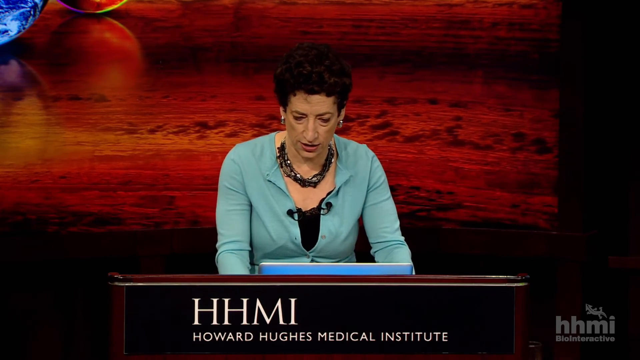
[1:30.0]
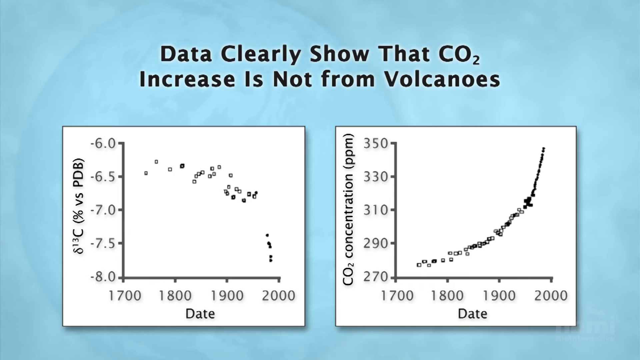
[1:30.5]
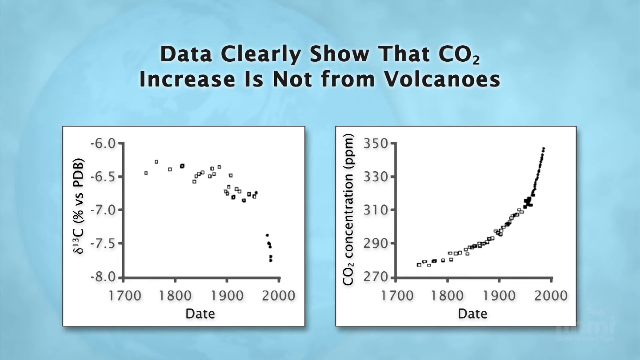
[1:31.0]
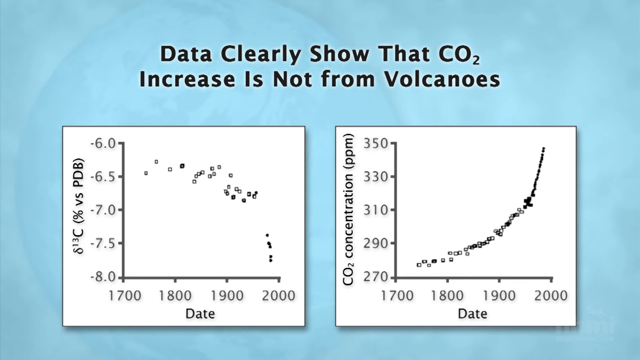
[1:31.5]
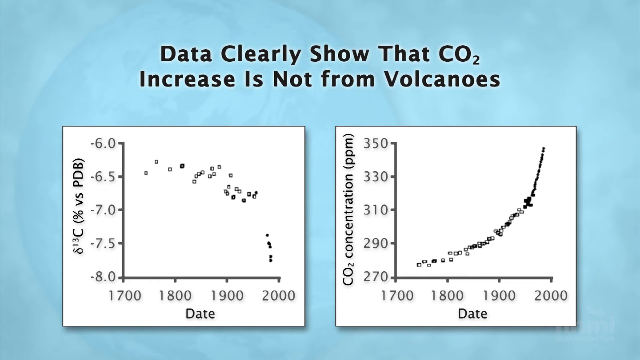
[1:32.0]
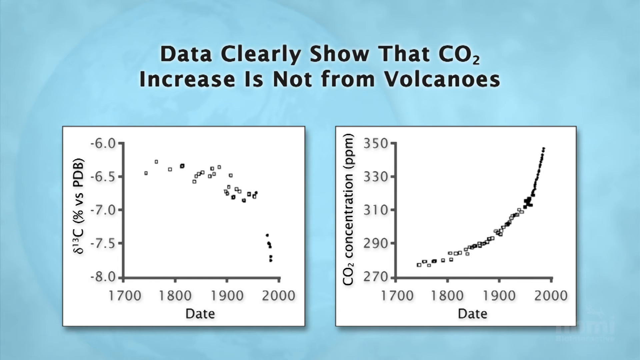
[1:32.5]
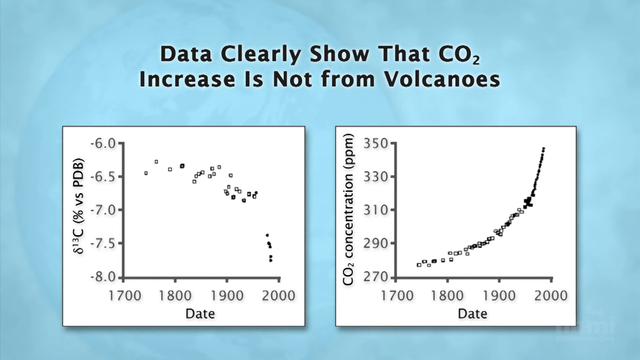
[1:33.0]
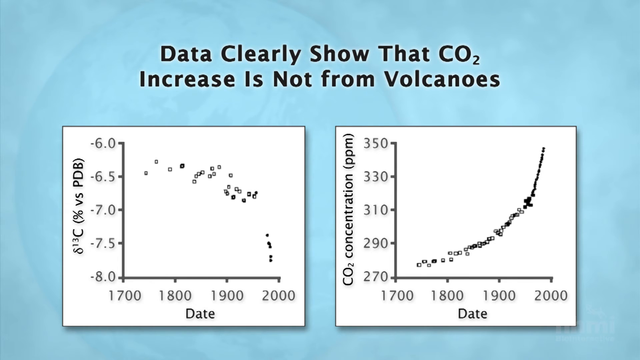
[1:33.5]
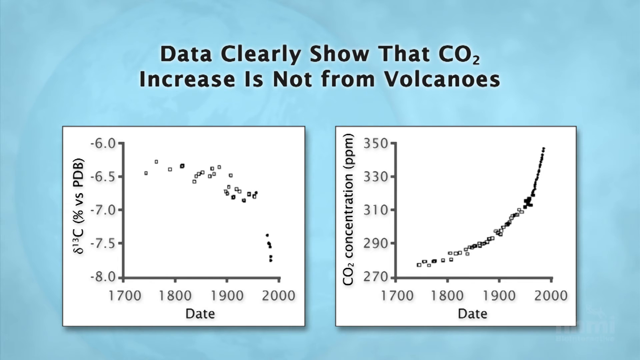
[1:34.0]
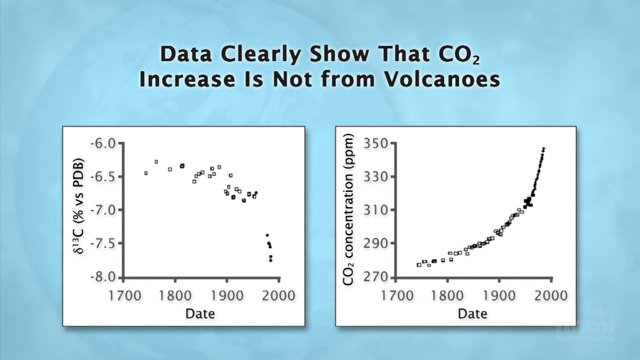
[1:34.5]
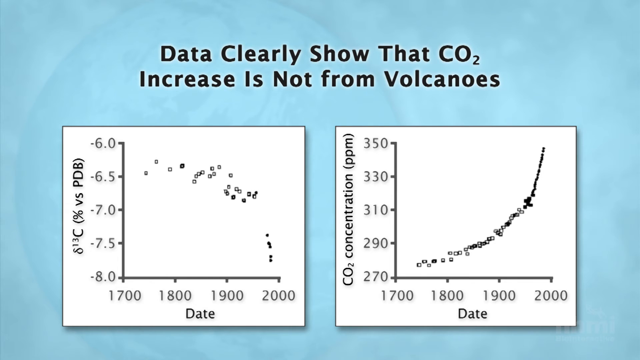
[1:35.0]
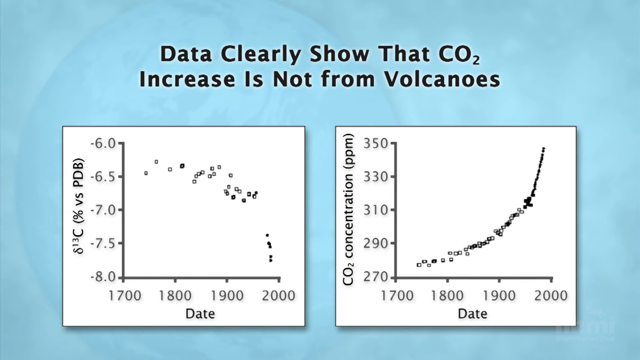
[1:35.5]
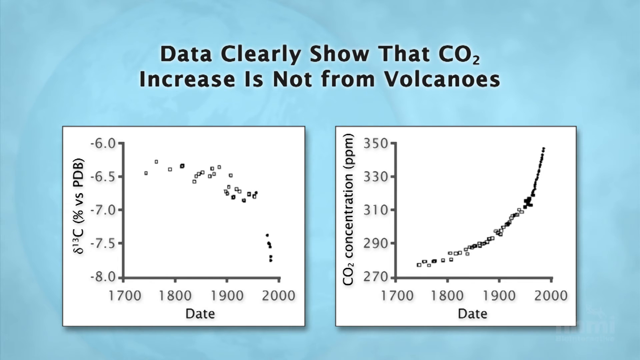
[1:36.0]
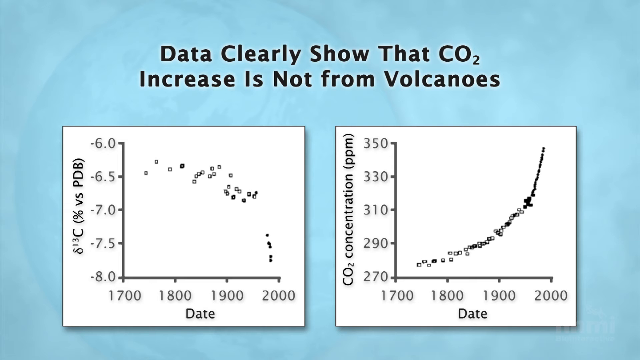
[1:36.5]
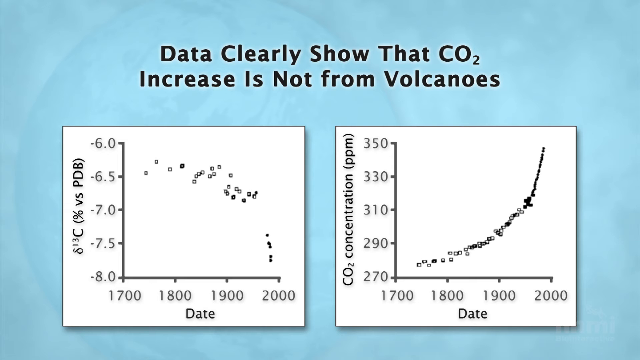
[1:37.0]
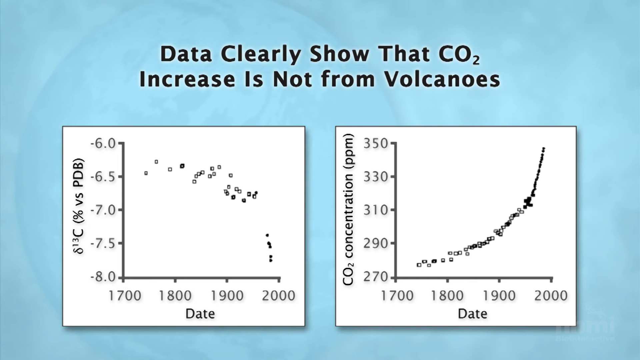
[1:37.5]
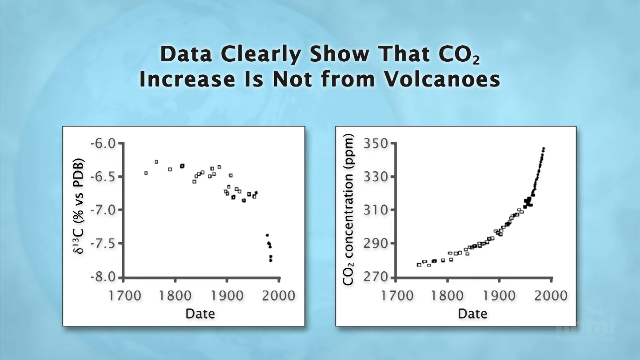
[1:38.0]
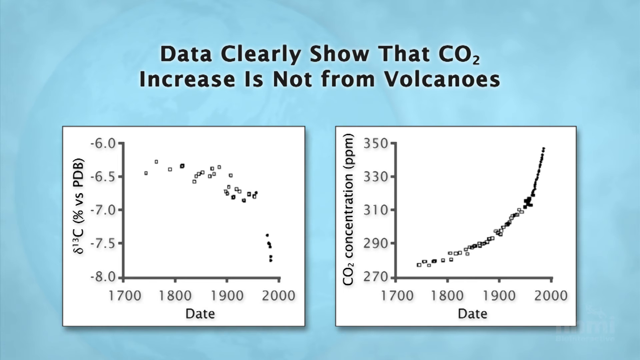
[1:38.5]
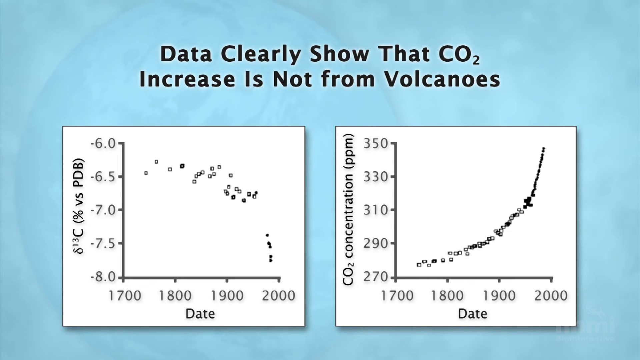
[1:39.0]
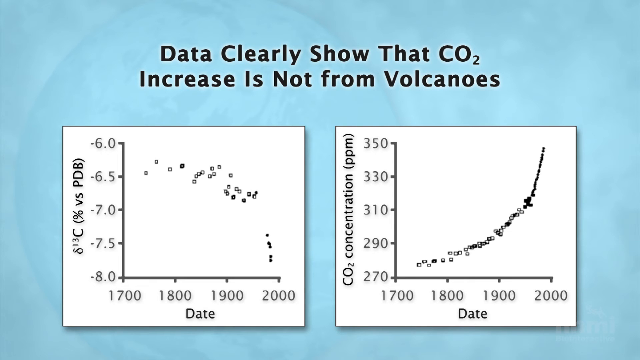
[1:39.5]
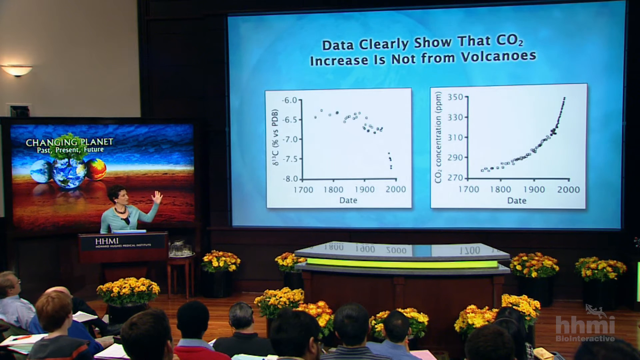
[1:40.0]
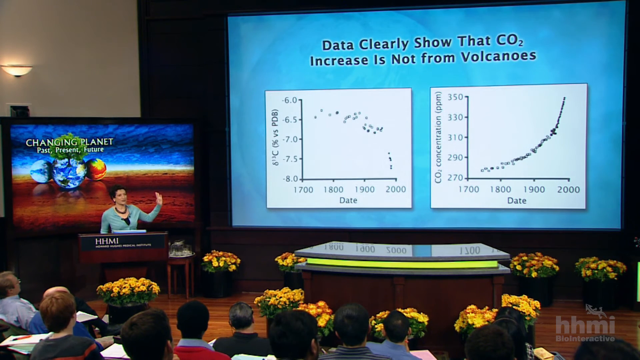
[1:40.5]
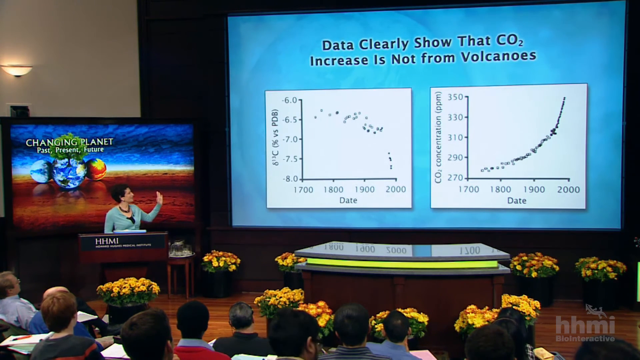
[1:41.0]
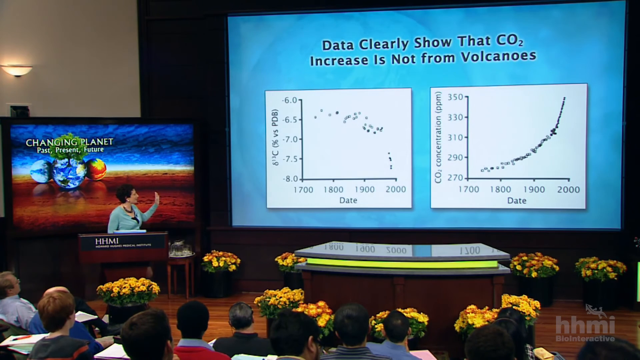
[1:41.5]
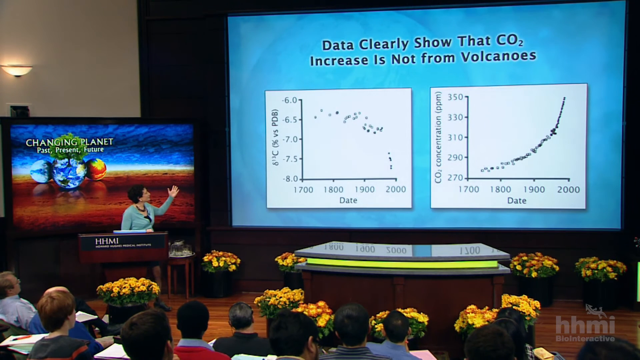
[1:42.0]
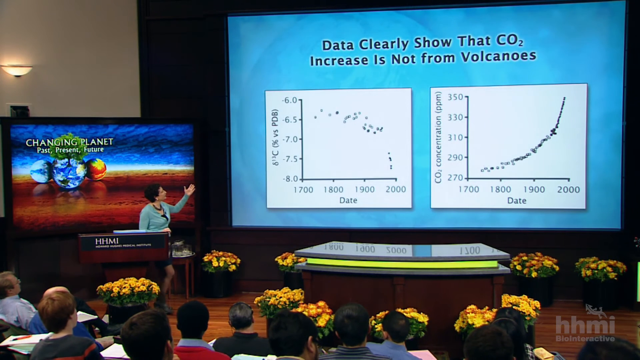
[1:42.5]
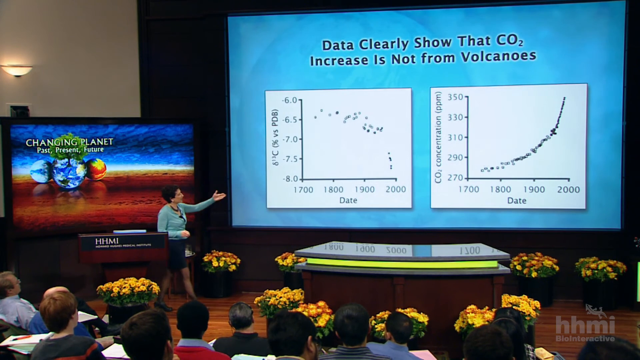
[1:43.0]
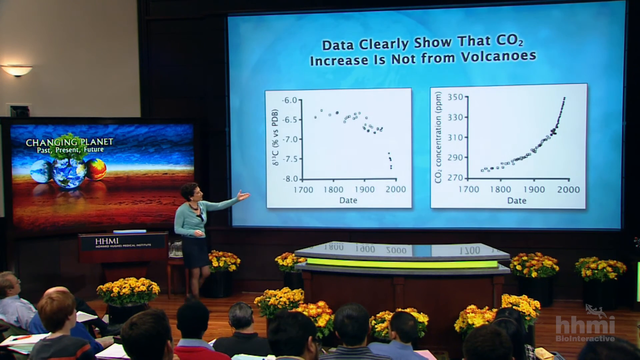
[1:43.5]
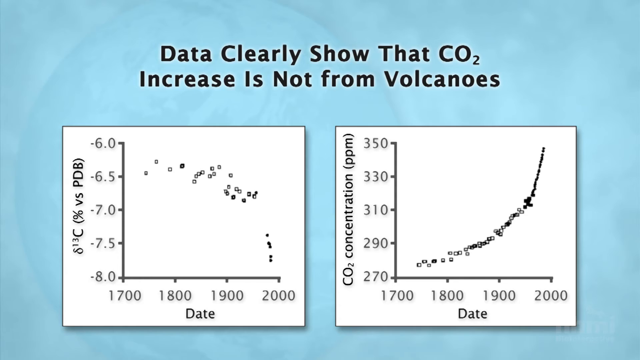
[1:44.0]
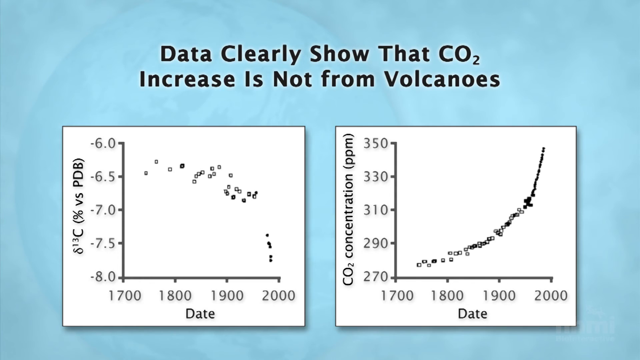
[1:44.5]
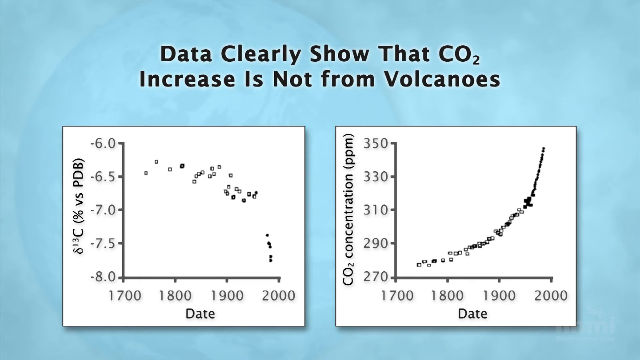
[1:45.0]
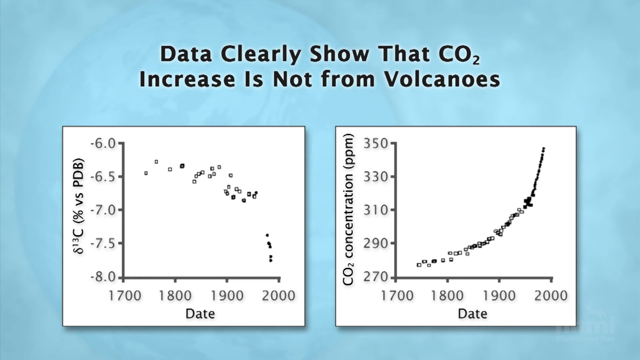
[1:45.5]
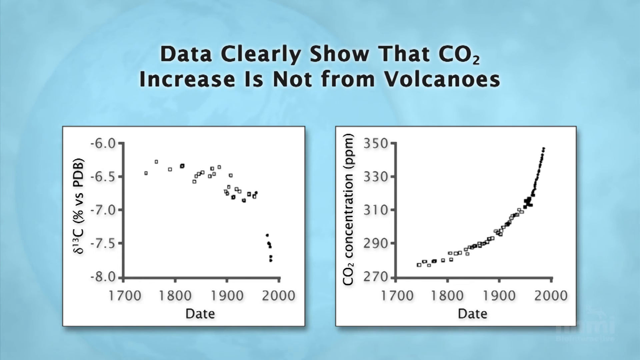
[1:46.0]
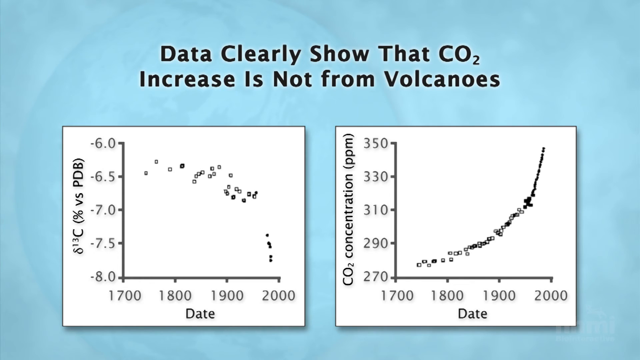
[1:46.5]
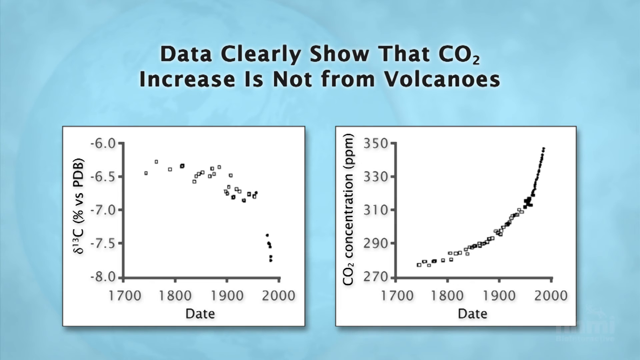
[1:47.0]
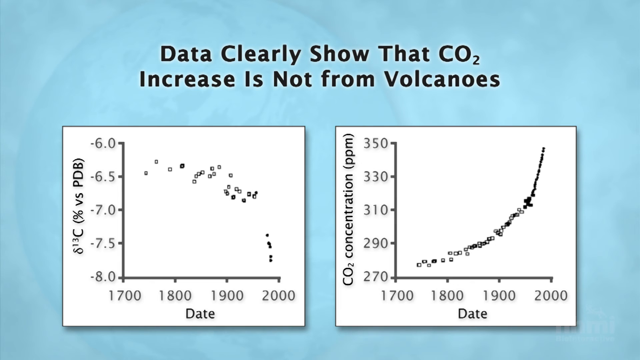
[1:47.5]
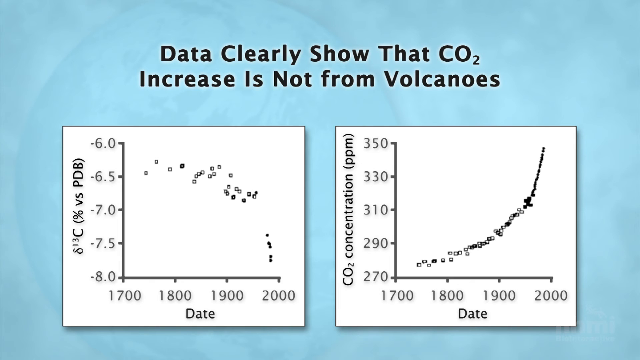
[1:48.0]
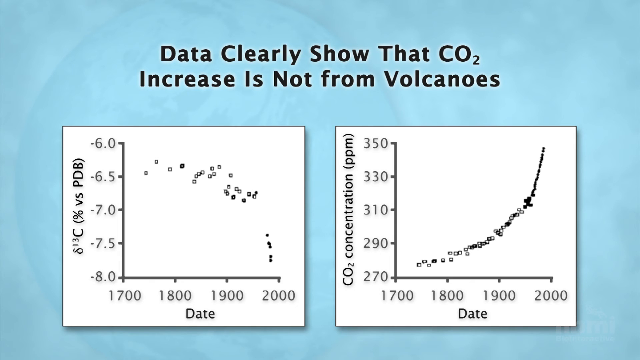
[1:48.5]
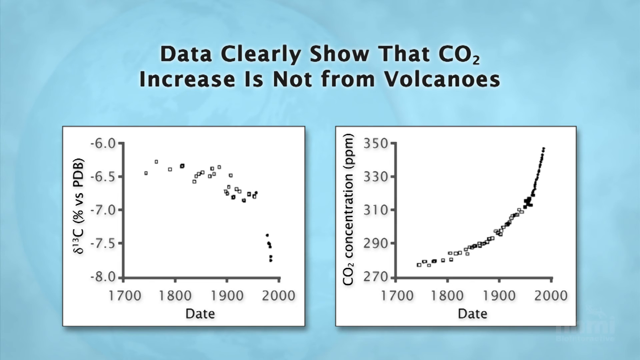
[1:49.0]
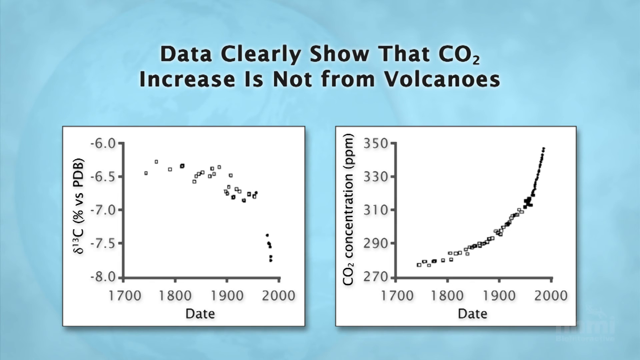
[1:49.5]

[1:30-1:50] A close-up shows the woman who is speaking, with the backdrop behind her, which looks to be wood with planets and a blue sky on it. After this quick look at the speaker, a couple of black-and-white charts appear on a blue background. Above the charts it says "data clearly shows that CO2 increase is not from volcanoes." Both charts look like they have dates from 1700 to 2000. The left chart says "13C percentage versus PDP" on its left side, and the right one says "CO2 concentration, PPM." Both have dots representing different measurements or readings.